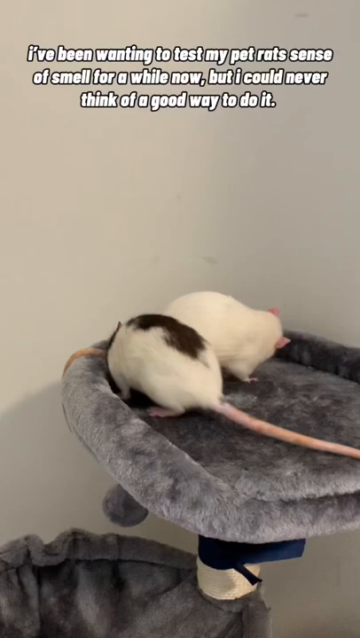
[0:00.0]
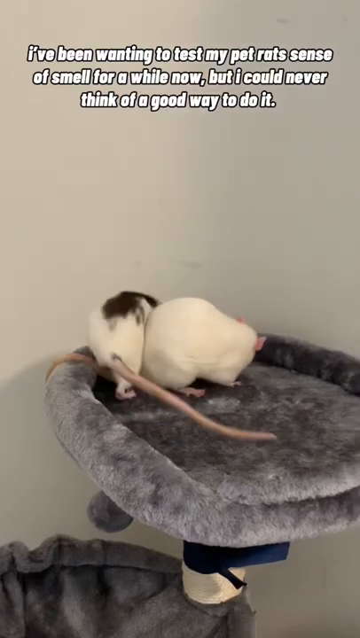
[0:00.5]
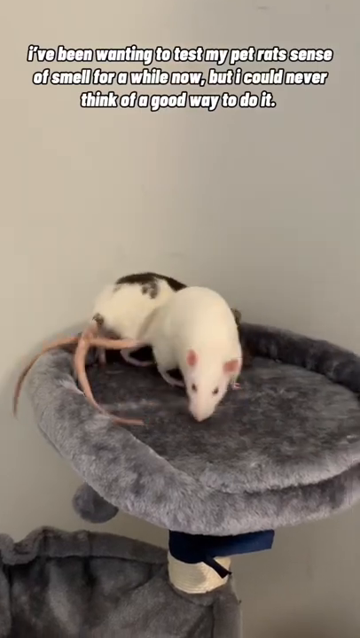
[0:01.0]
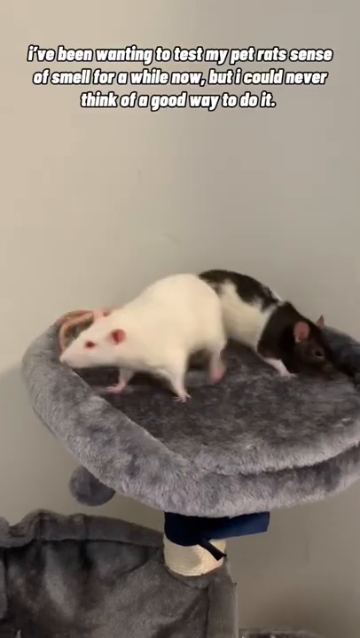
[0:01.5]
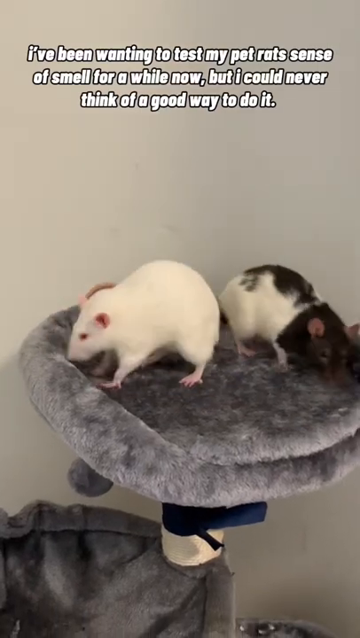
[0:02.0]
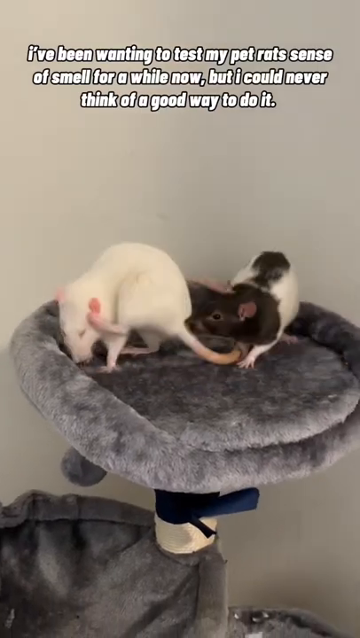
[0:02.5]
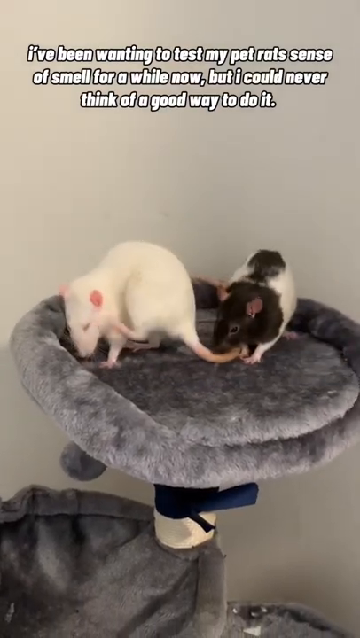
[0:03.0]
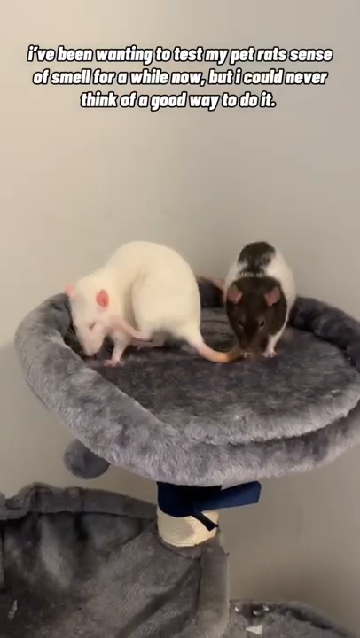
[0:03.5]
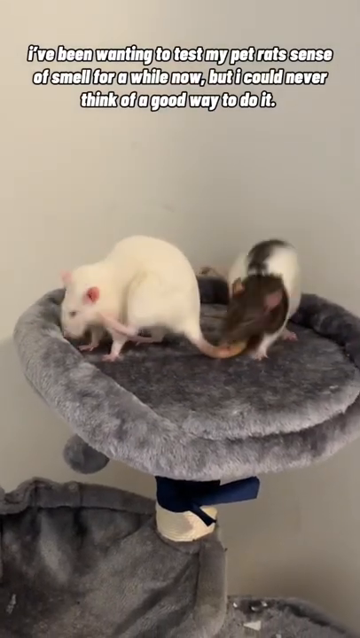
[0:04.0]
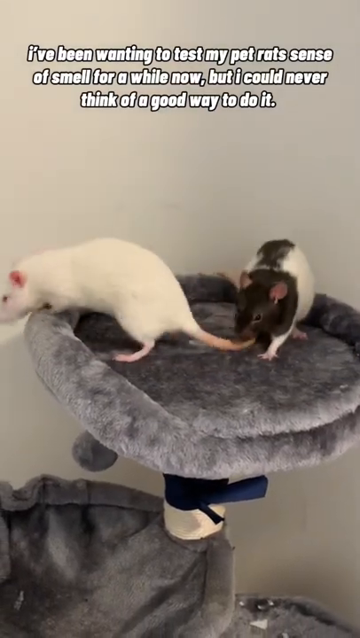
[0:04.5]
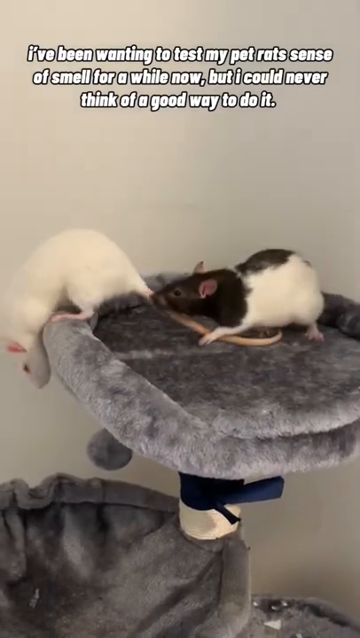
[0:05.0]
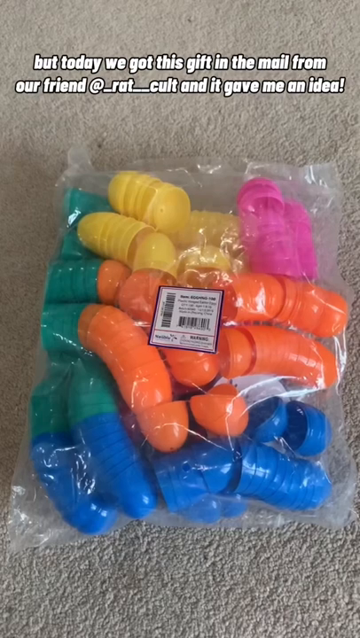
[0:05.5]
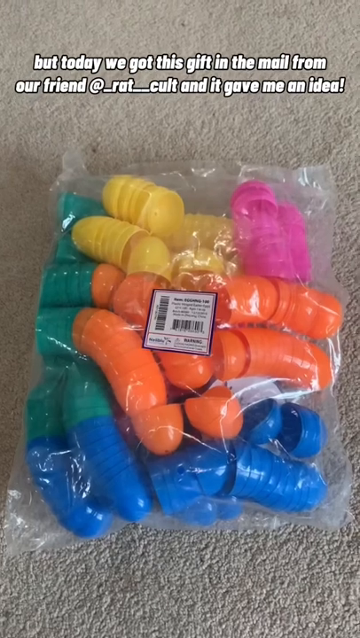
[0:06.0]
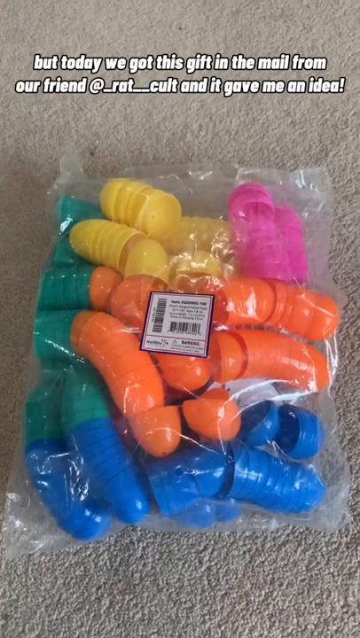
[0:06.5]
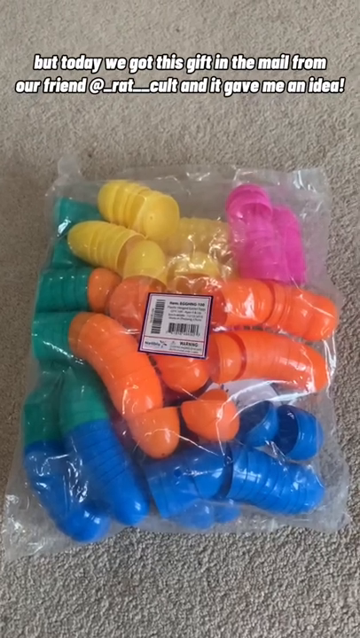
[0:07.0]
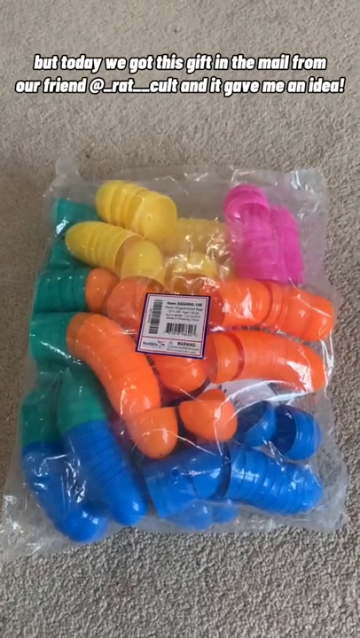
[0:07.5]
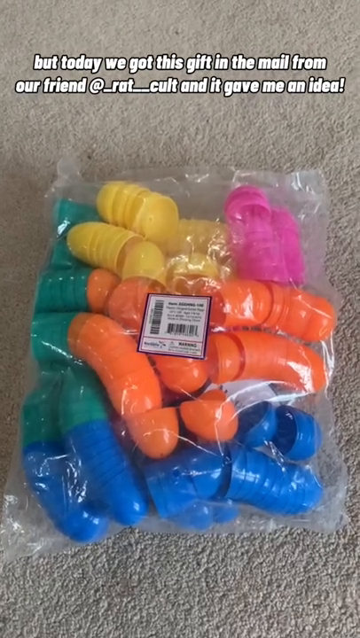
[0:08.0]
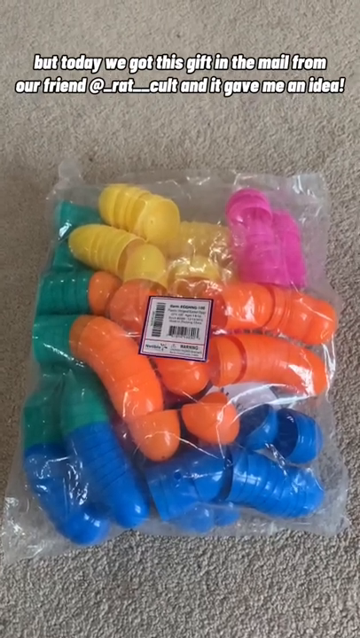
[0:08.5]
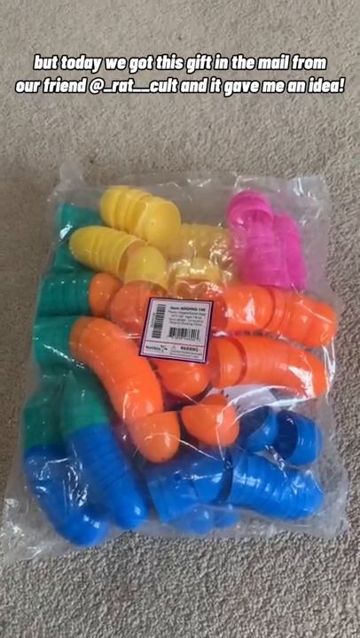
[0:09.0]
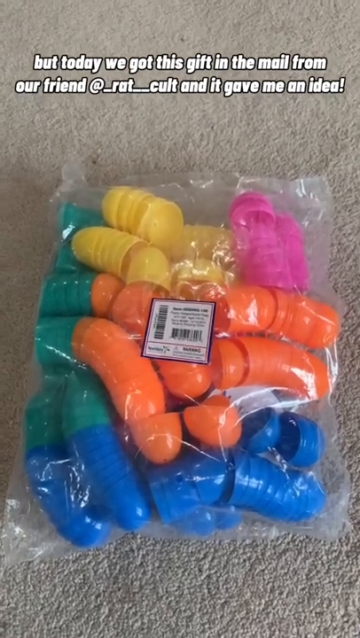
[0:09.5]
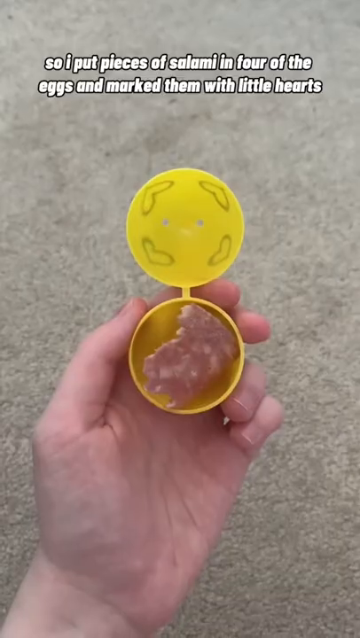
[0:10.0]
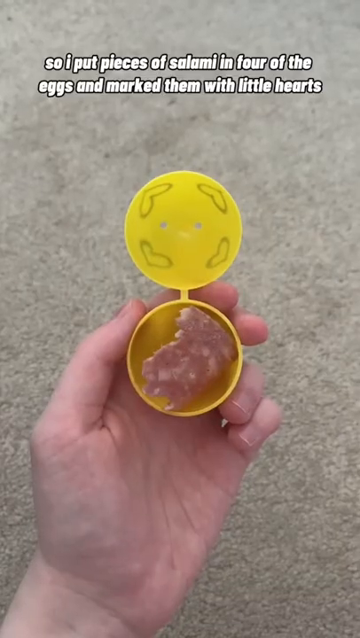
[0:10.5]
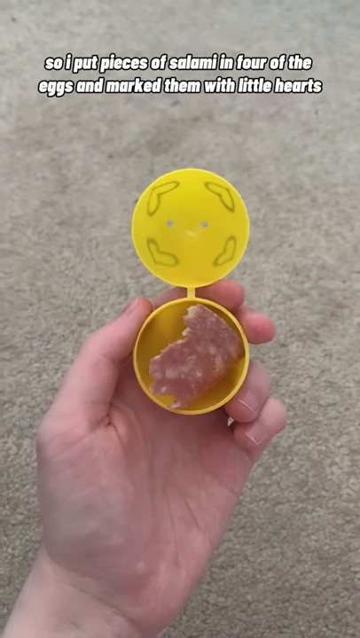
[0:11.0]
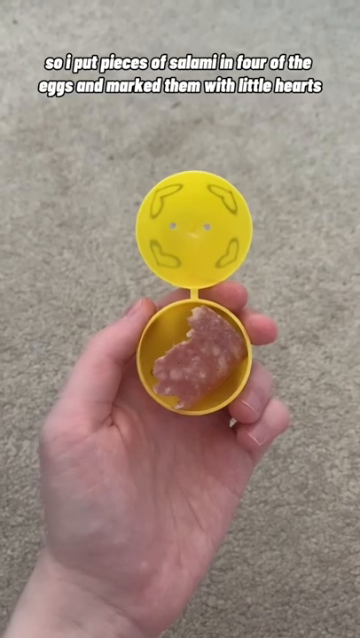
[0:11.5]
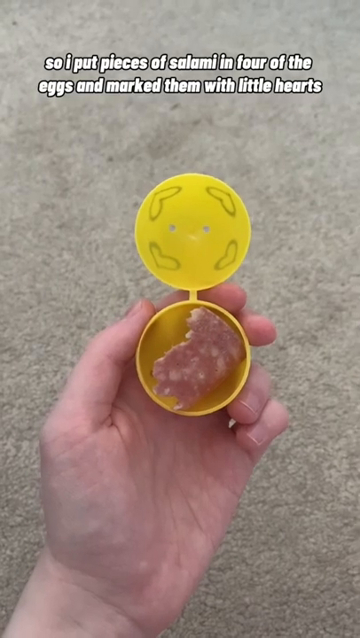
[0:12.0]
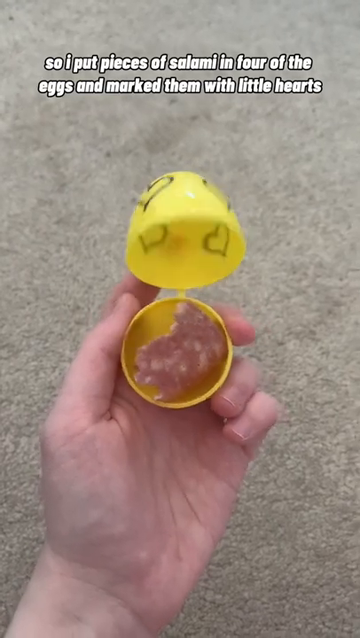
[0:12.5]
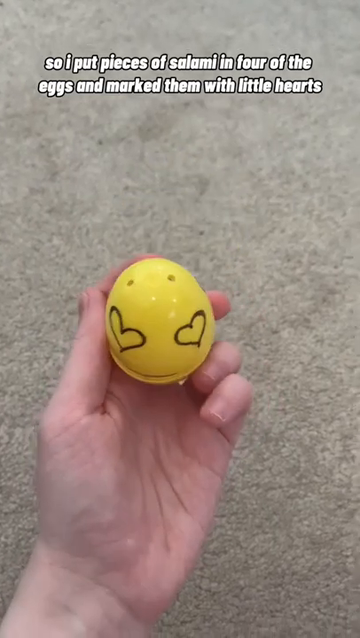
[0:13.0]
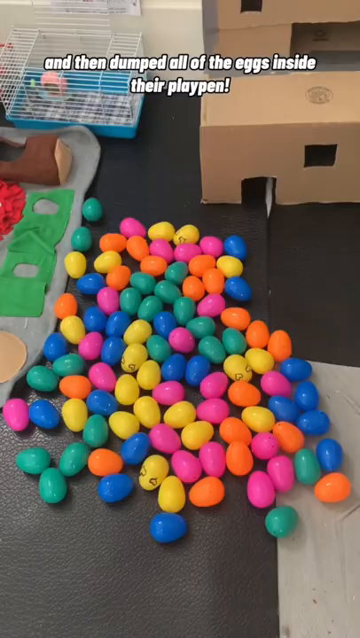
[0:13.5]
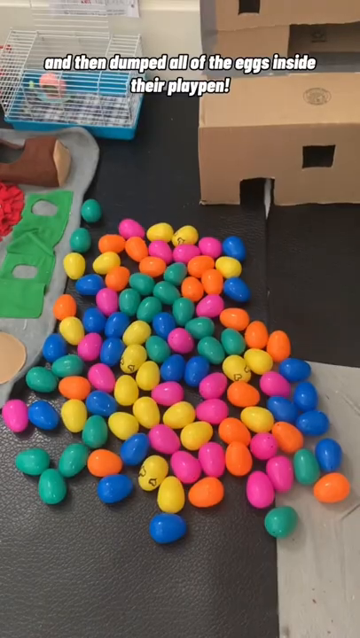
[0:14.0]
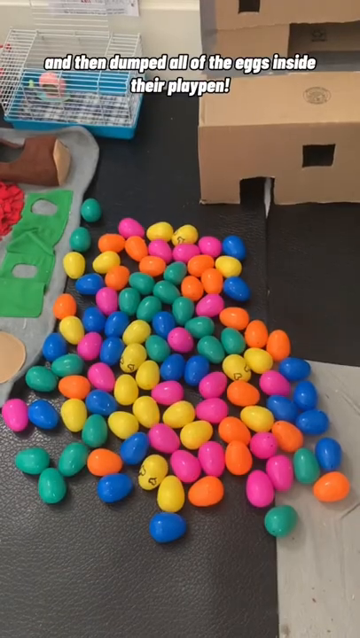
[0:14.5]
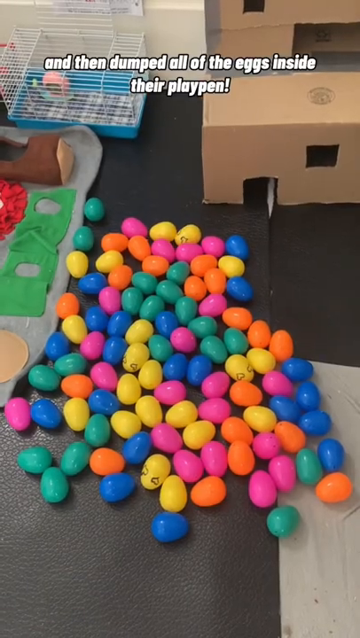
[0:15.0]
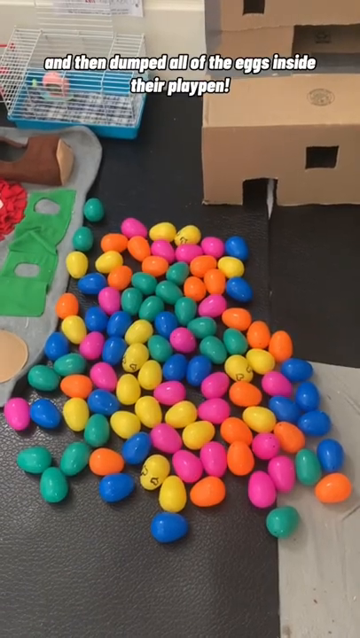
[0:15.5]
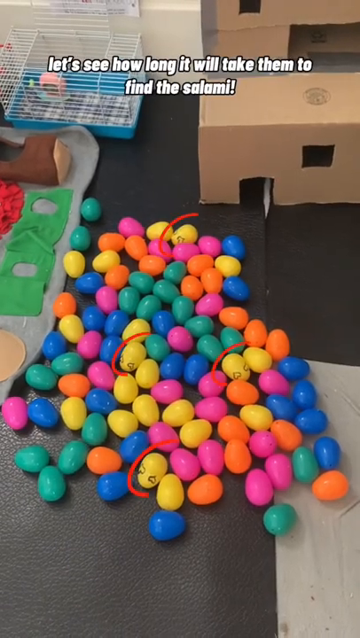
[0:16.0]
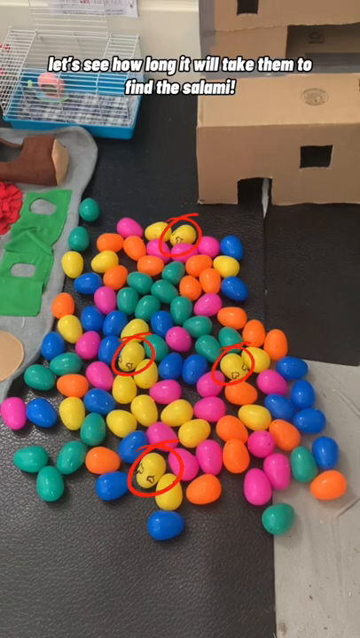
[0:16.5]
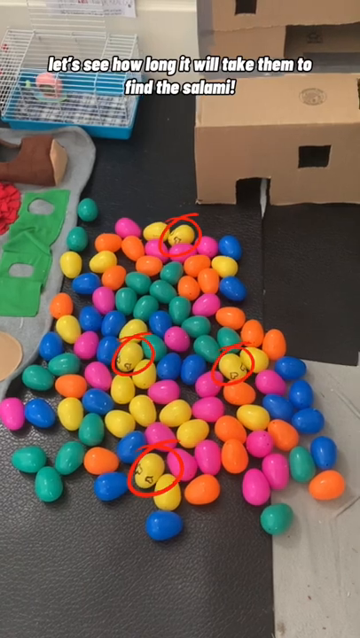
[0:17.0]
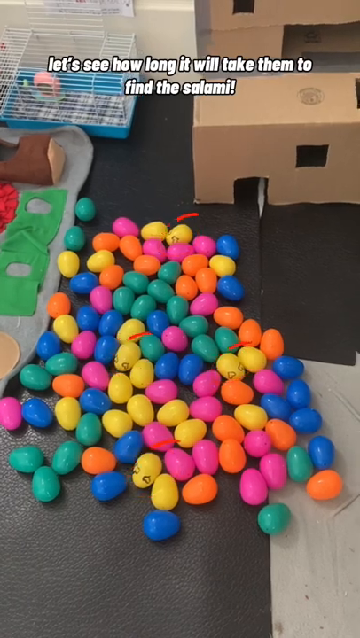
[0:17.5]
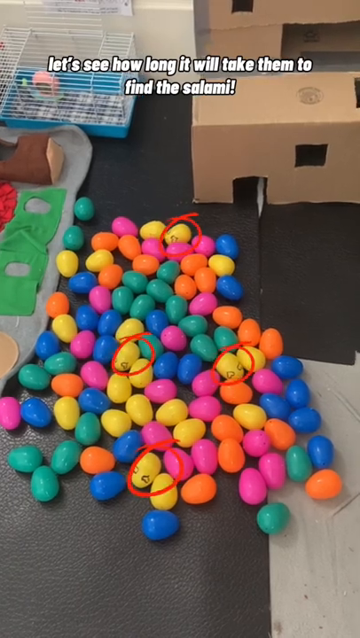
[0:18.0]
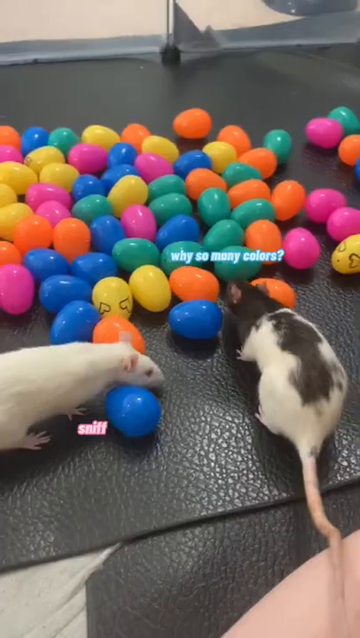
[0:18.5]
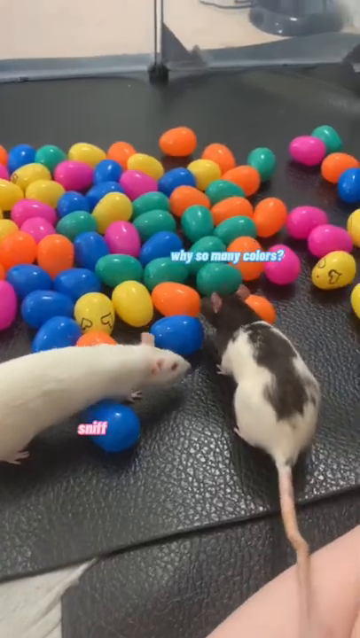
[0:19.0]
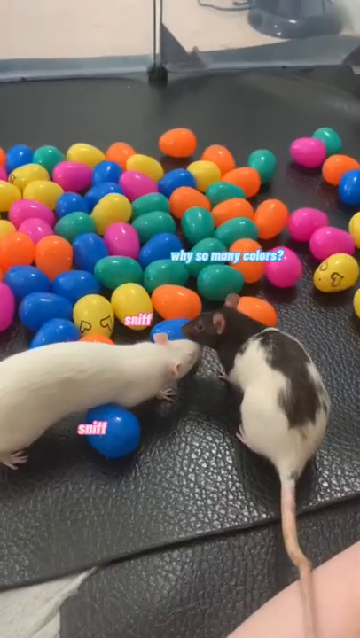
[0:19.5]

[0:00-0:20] Two mice, one white and one black and white, stand on top of what looks like a pet tree and go around in a circle once. Next, what appears to be a hand holds a toy egg of the kind given at Easter, which can hold small things, and it has what appears to be food for the mice in it. After that, a pile of many toy eggs in varying colors is shown, and one of them, the egg with the food in it, is circled. The idea is to see which mouse can tell where the food is in the pile.